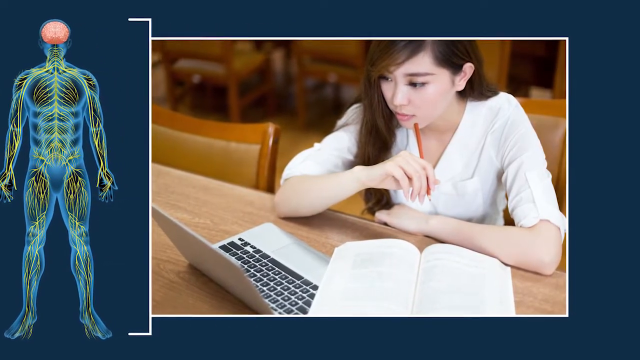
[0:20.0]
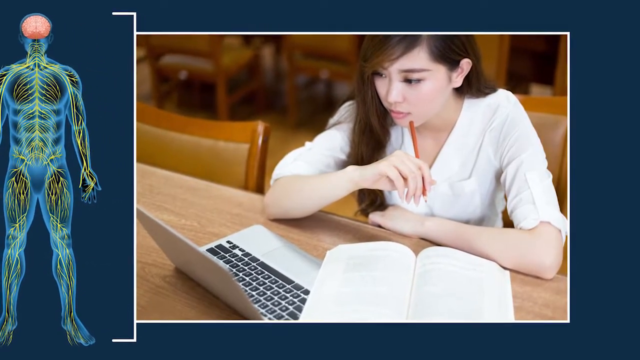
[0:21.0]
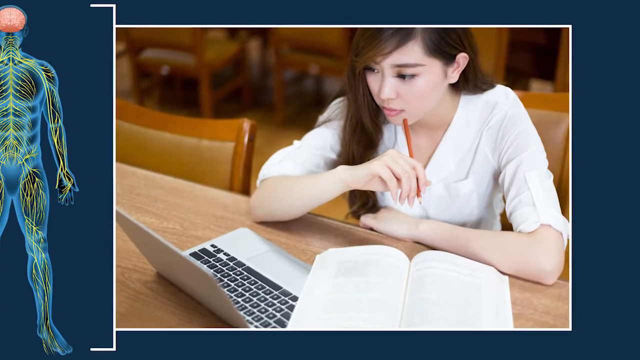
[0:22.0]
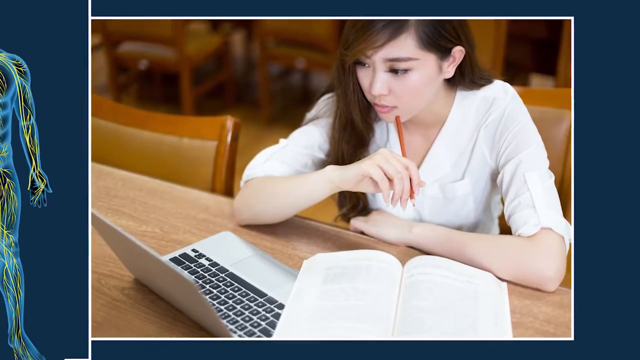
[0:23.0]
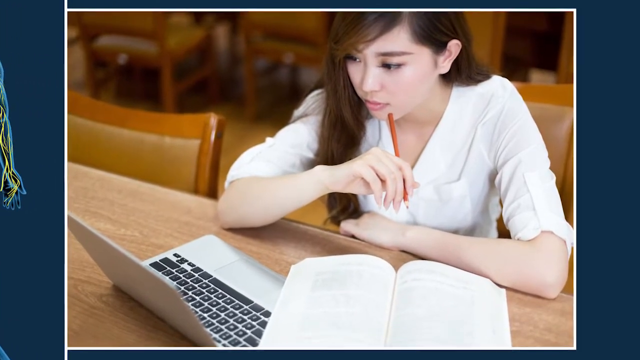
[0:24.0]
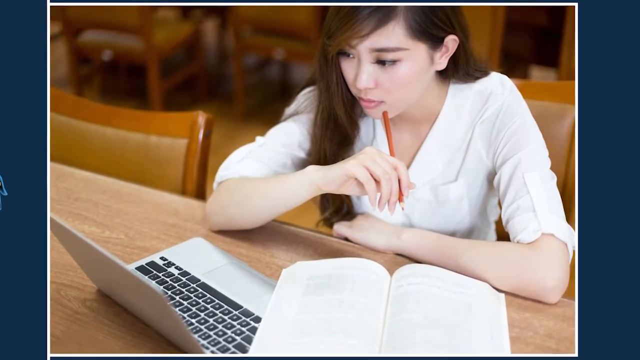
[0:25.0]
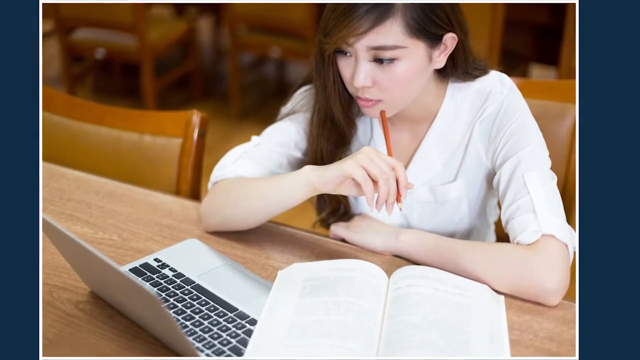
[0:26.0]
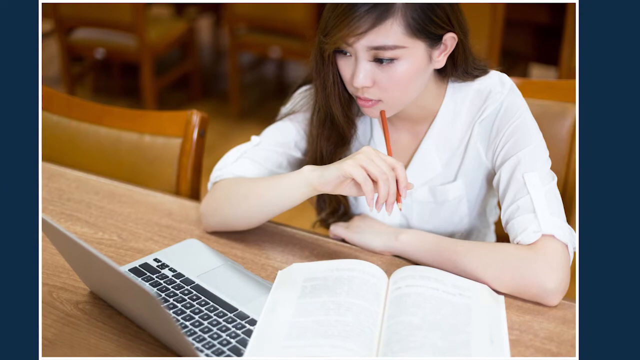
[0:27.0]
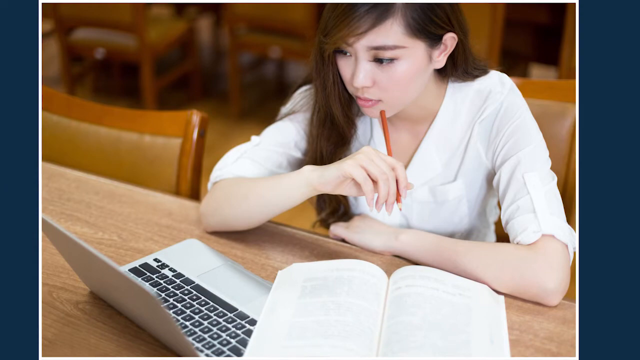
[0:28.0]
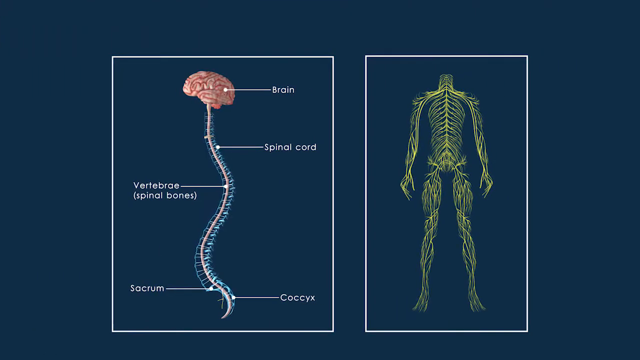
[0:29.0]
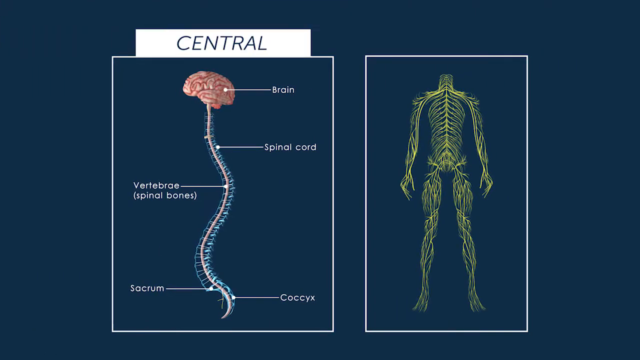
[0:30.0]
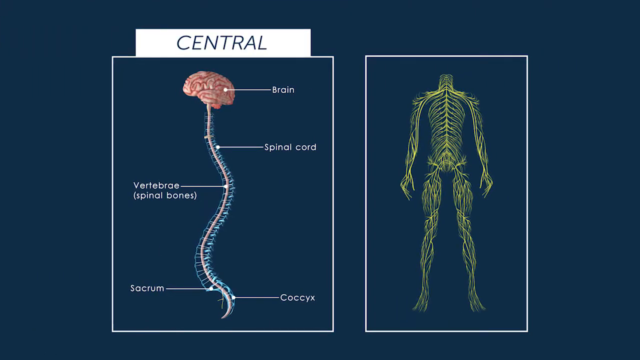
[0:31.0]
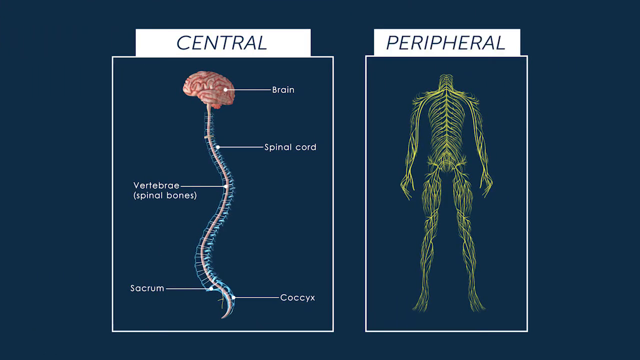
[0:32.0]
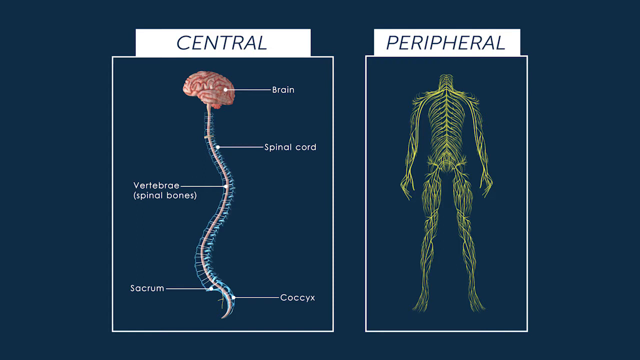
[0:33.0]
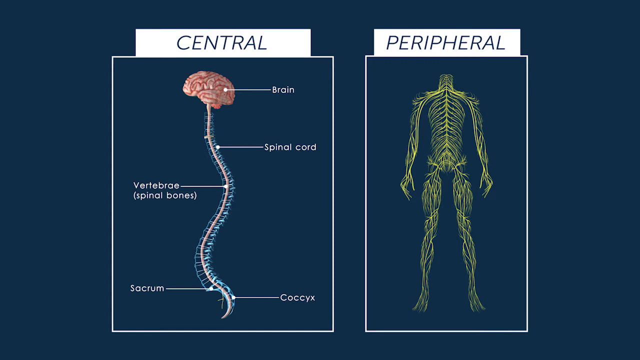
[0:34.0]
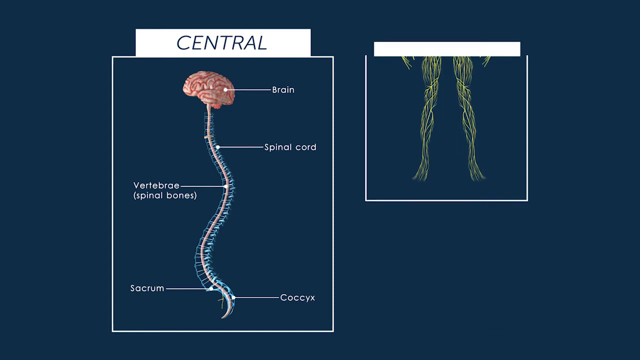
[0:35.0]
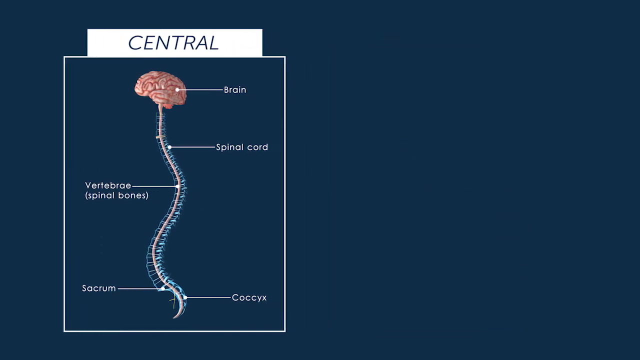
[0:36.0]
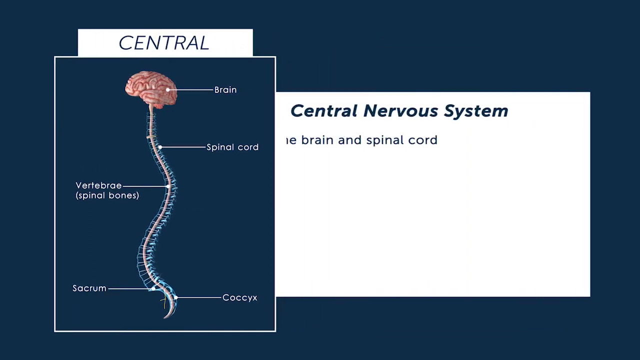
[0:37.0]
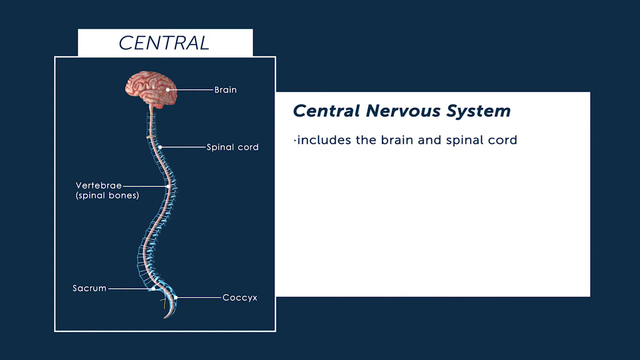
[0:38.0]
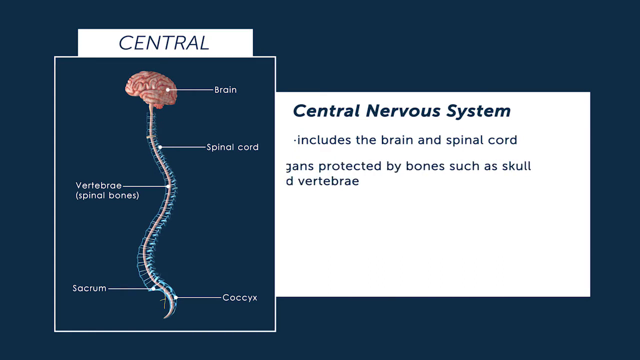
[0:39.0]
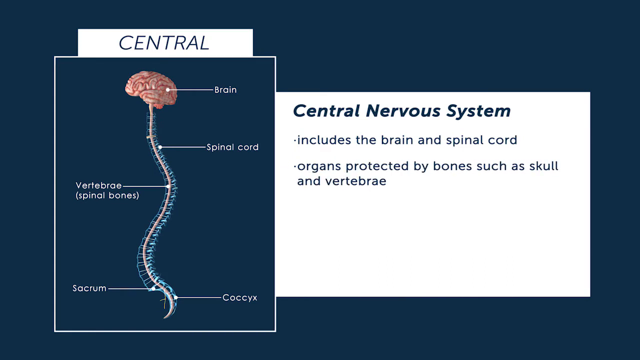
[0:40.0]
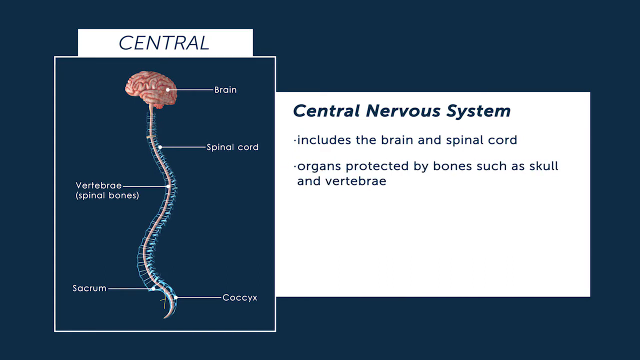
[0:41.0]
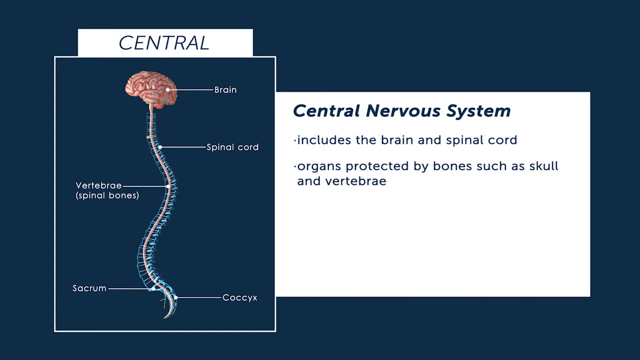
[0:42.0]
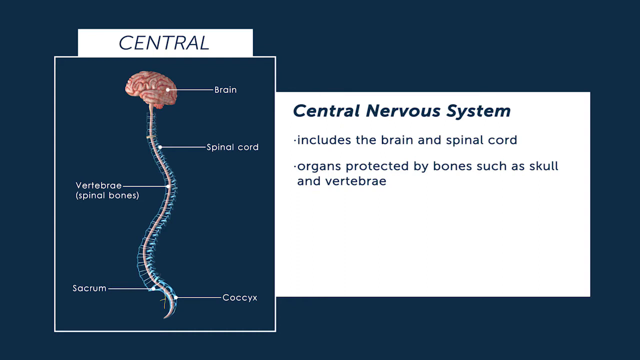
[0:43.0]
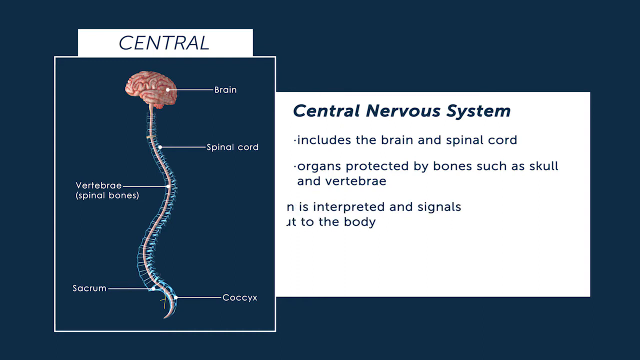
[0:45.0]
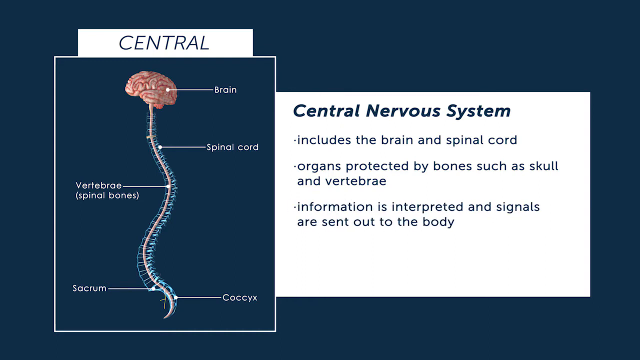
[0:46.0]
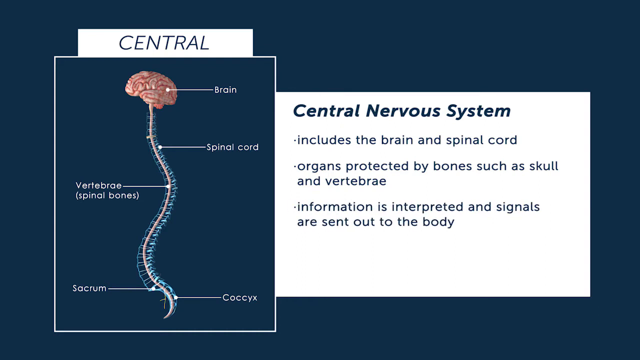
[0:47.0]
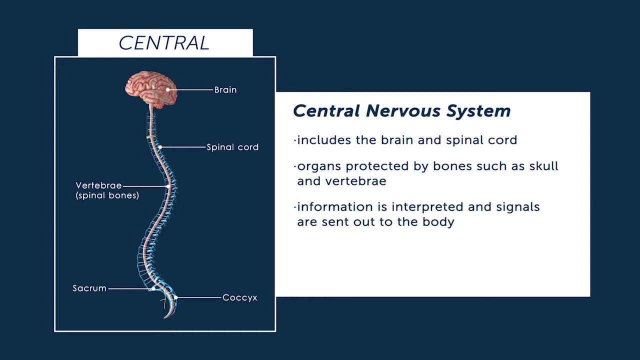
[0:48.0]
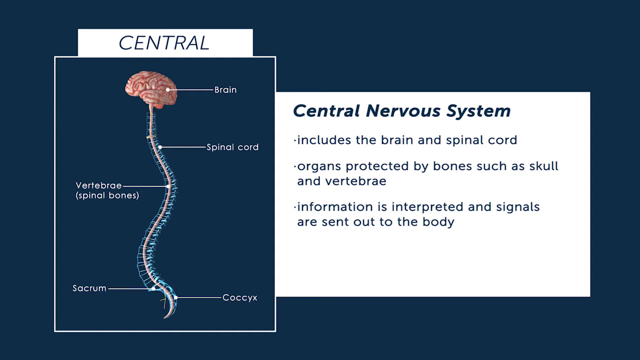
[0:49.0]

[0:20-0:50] A more zoomed-in view shows the woman sitting at the desk. The skeleton, skin and organs on the left-hand side disappear off the screen to the left. The screen then moves to the left, bringing in a new image from the right. Two white-bordered boxes appear, one on the left and one on the right. The right box shows a skeleton view without the head, and the left box shows what looks like the brain and spinal cord, which are labelled. Titles pop up above each box: the left box says "Central" and the right box says "Peripheral". The screen moves left so that only the central box with the brain and spine remains, and to its right a new white box contains the words "central nervous system includes the brain and spine cord". Bullet points then appear reading "organs protected by bones such as skull and vertebrae" and "Information is interpreted and signals are sent out to the body".